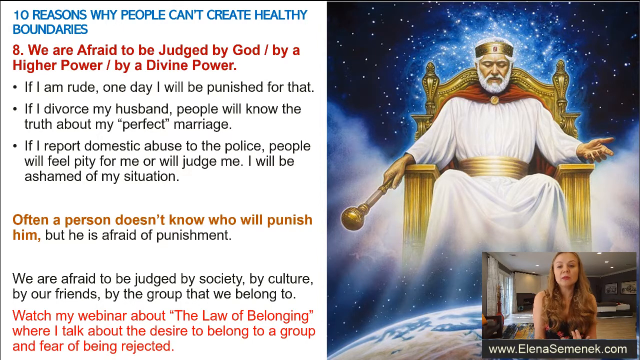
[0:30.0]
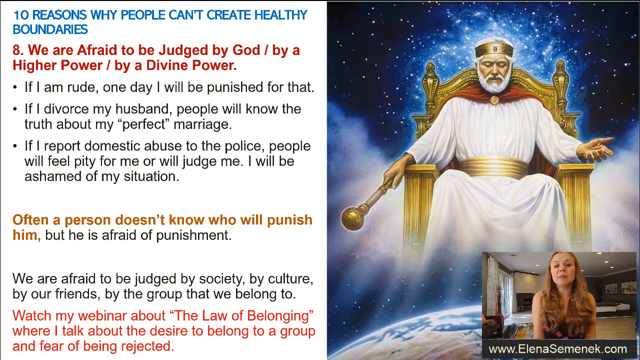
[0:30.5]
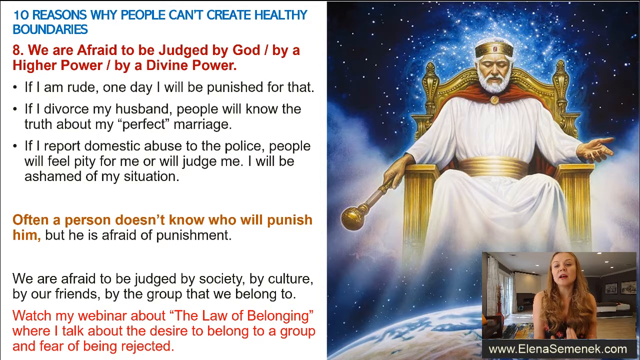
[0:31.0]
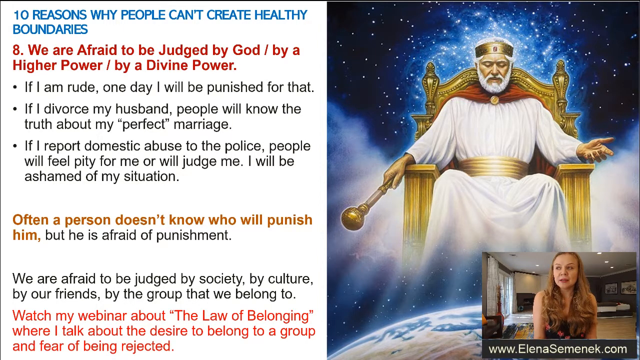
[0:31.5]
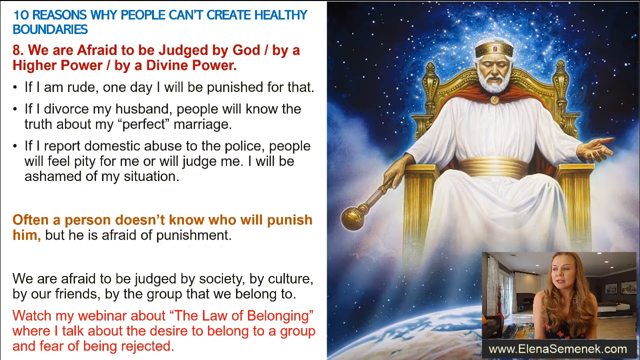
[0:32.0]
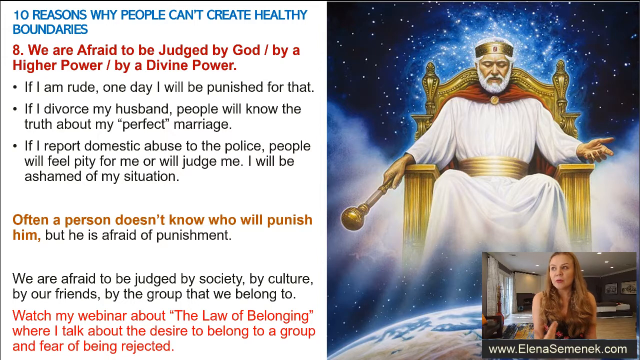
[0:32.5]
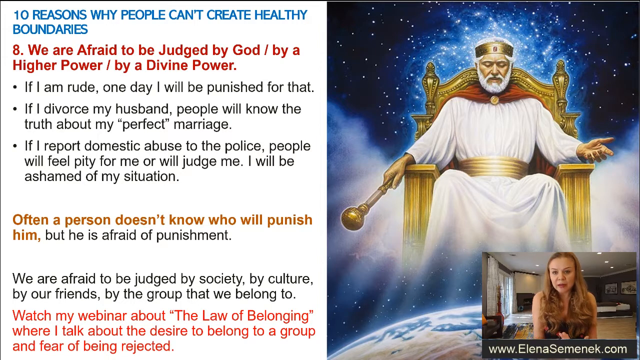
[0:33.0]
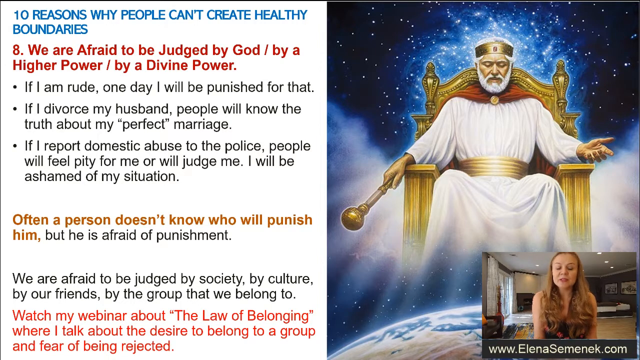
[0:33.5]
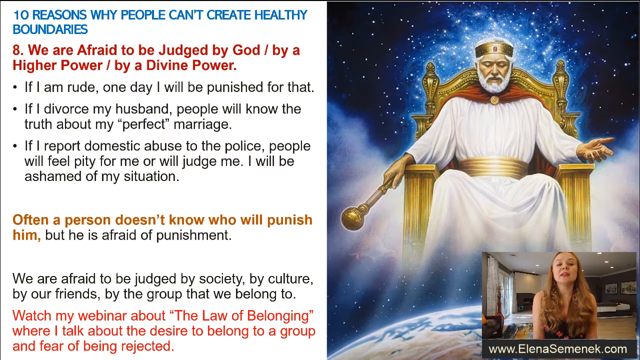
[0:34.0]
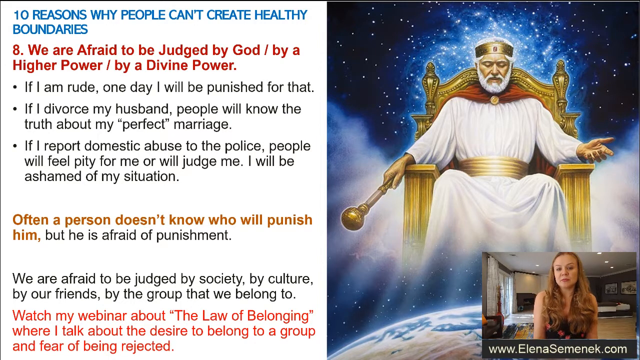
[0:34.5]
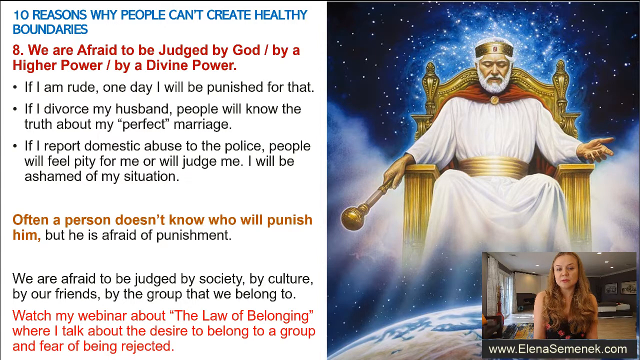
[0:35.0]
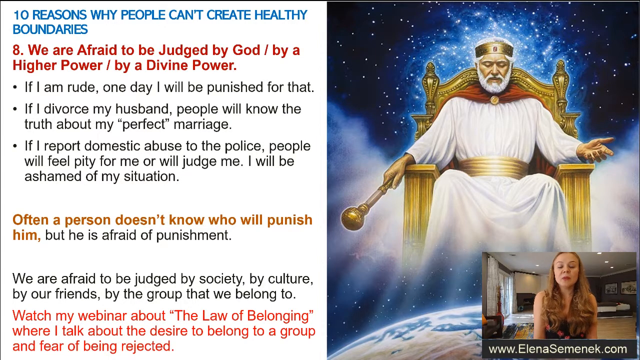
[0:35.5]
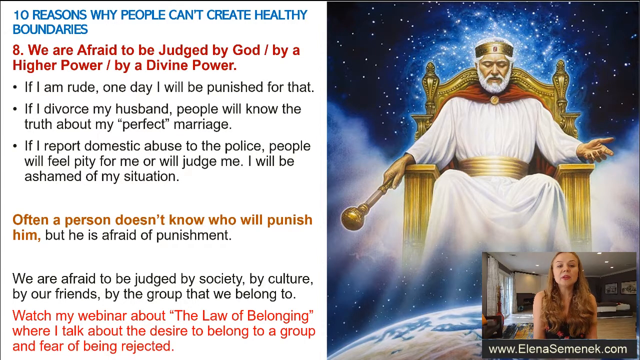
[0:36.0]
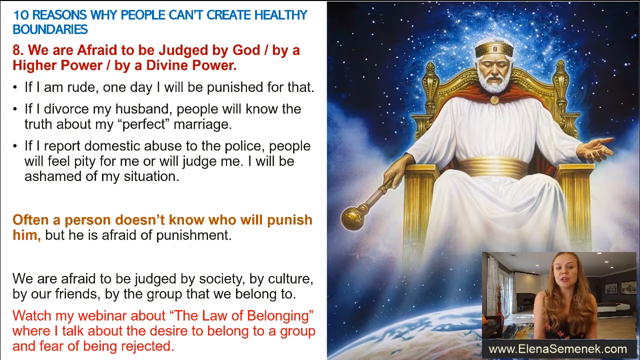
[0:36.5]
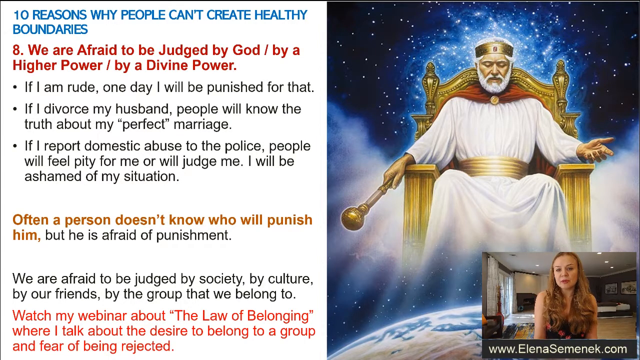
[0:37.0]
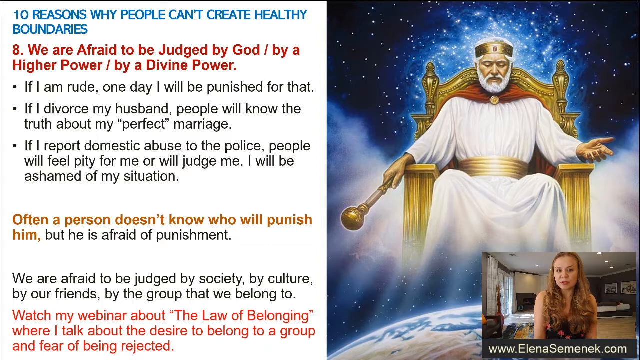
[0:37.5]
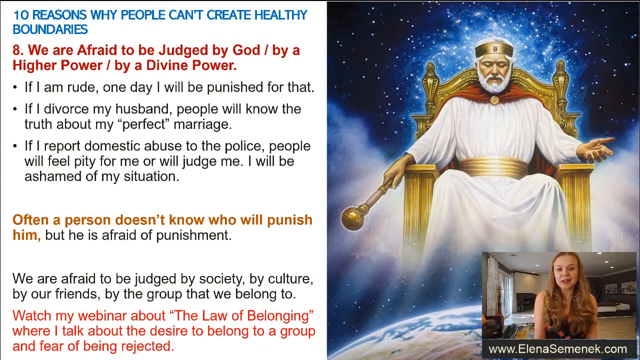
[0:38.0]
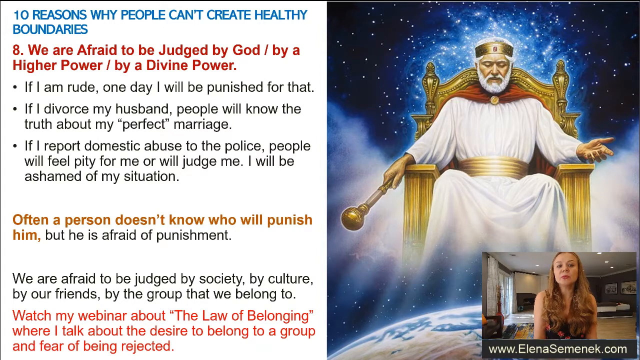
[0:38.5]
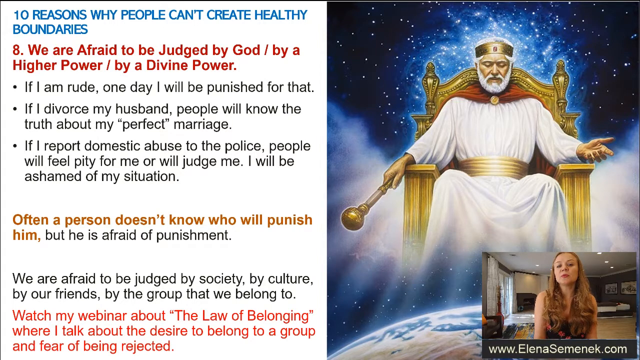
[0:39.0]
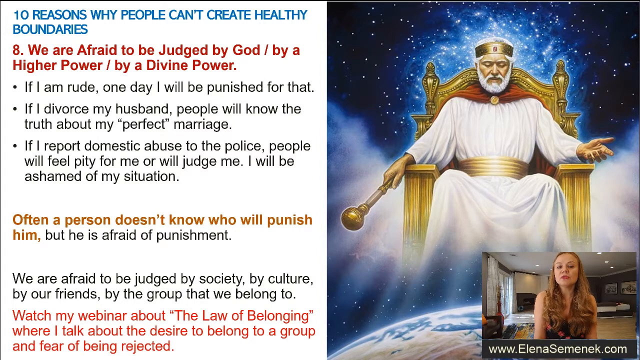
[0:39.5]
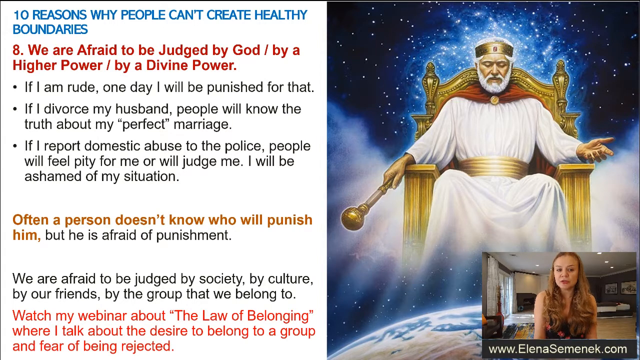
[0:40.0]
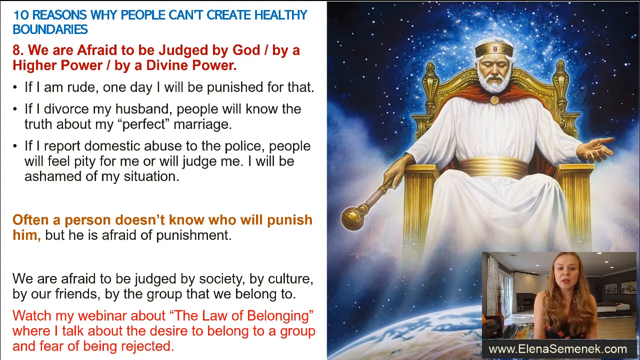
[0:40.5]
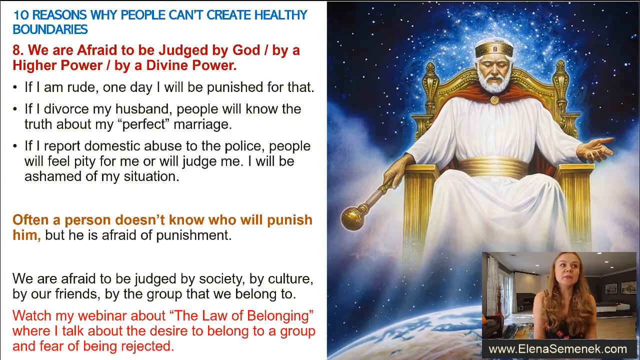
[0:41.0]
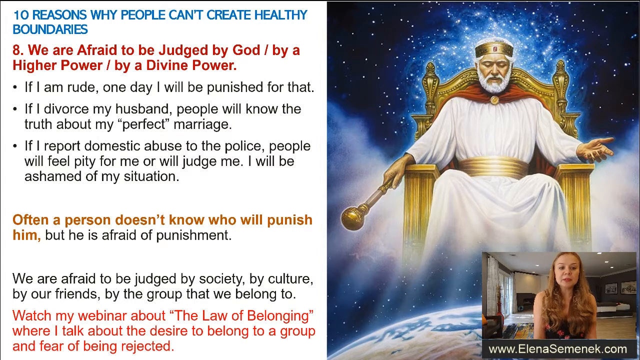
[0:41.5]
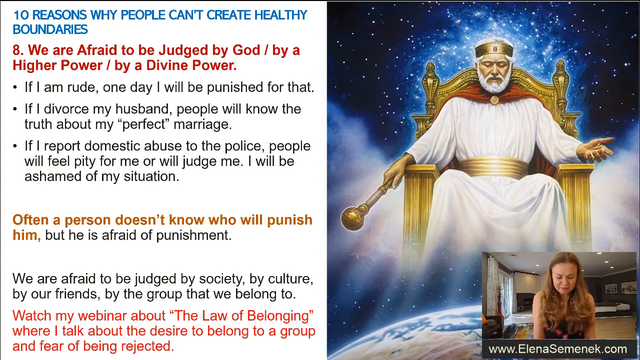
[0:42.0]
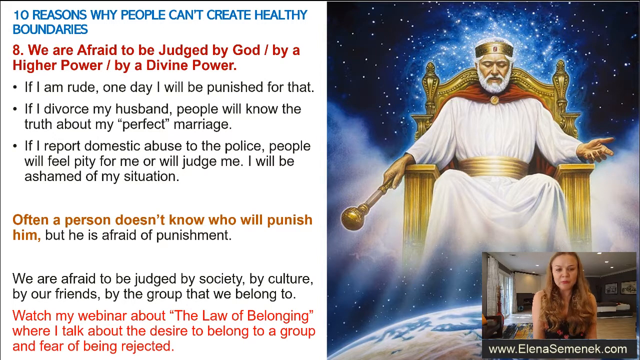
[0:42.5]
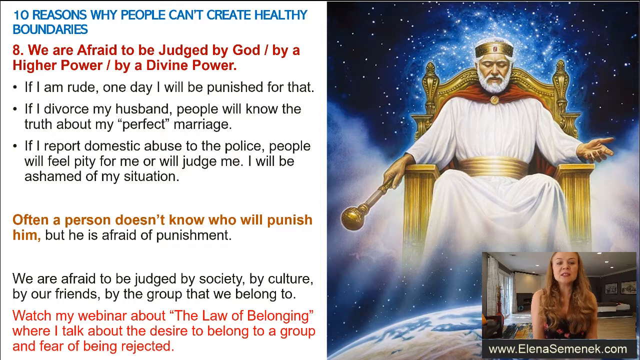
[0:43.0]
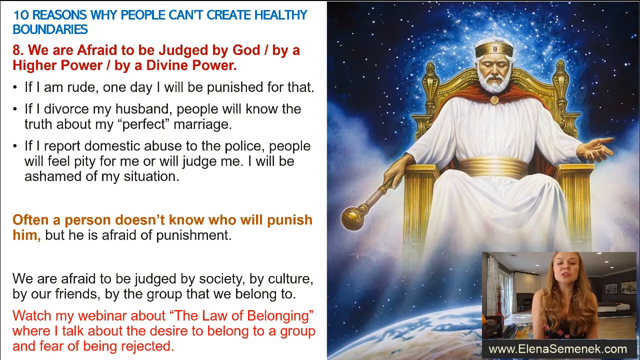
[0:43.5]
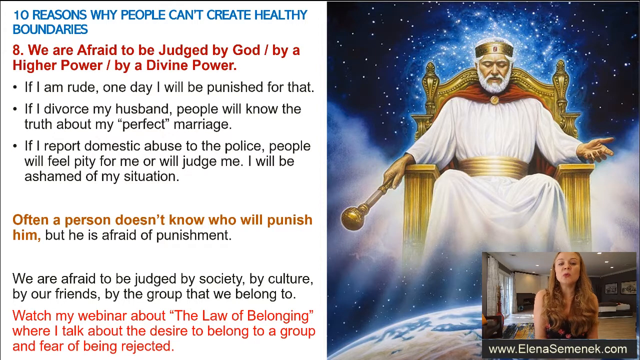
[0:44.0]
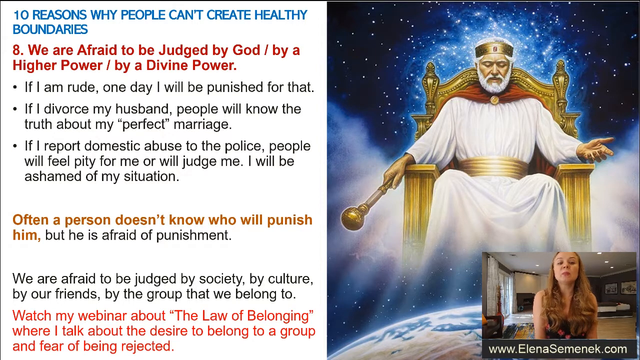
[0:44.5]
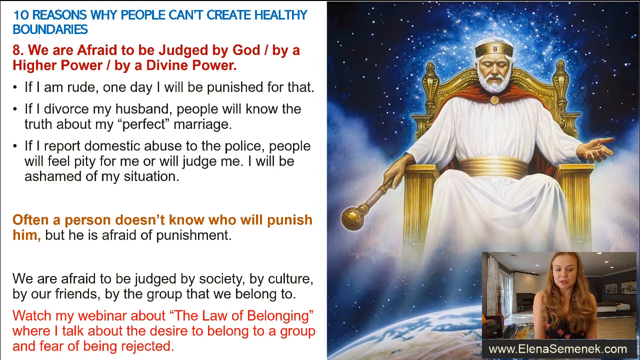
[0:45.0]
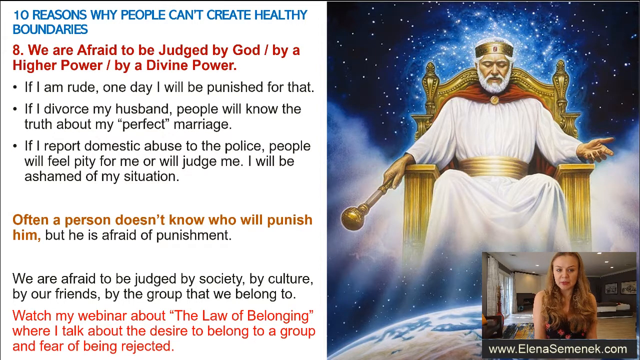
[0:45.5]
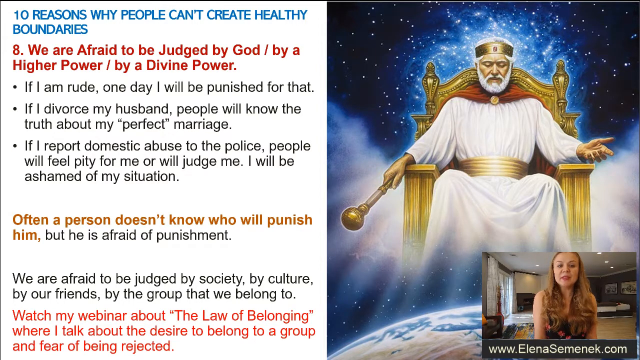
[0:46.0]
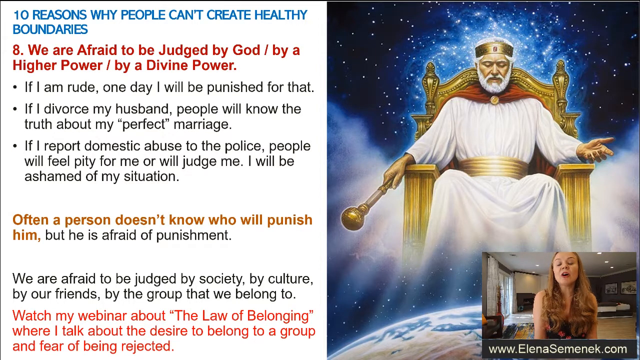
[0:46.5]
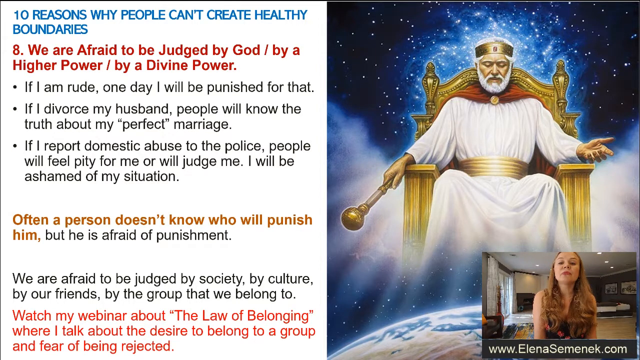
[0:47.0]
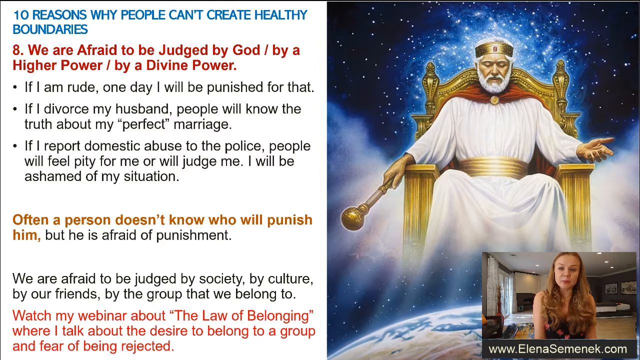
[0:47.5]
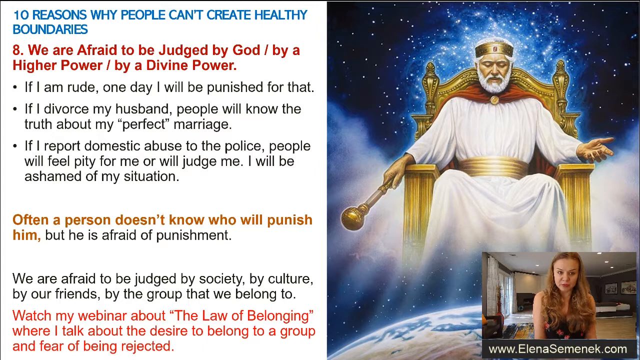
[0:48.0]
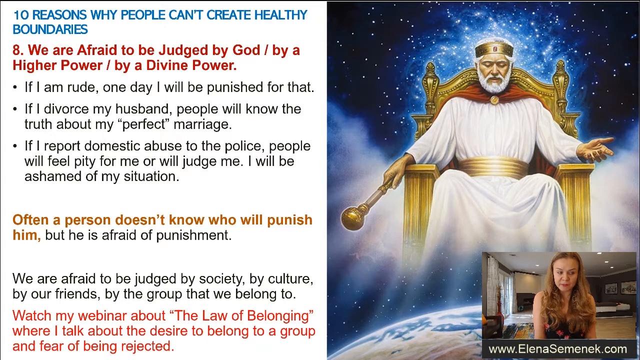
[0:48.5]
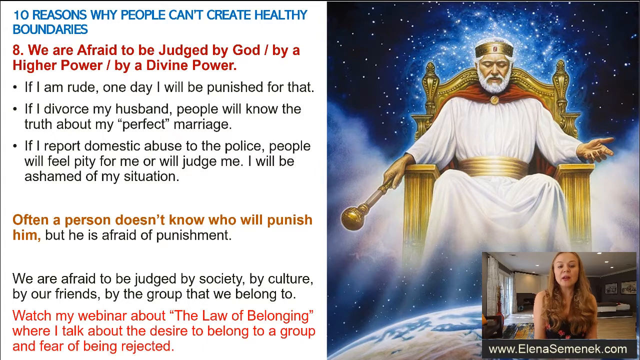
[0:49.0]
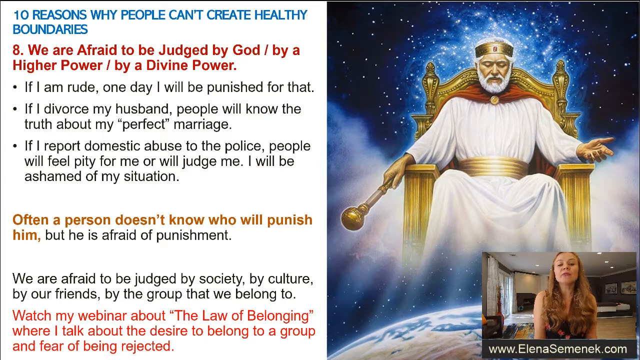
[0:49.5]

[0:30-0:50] In the bottom right-hand corner of the screen is a separate, smaller screen showing a woman with long blonde hair in a black tank top with designs on the front. She speaks while looking directly at the camera, and along the bottom of that video feed it says "www.elanaseminic.com". On the right half of the screen above her is a picture of a big golden throne, apparently a digital drawing. The figure on it has a gold belt, holds a gold spear in his right hand, wears a gold crown, and has a thick white beard and mustache and white hair. Behind him are outer space, white stars and darkness. On the left half of the screen, starting at the very top, it reads: "Ten reasons why people can't create healthy boundaries. We are afraid to be judged by God, by higher power, by a divine power. If I am rude, one day I will be punished for that. If I divorce my husband, people will know the truth about my marriage. If I report domestic abuse to the police, people will feel pity for me or will judge me. I will be ashamed in my situation. Often a person doesn't know who will punish him, but he is afraid of punishment. We are afraid to be judged by society, by culture, by our friends, by the group that we belong to." Underneath, written in red, it says "watch my webinar about the law of belonging where I talked about the desire to belong to a group and fear of being rejected". The woman in the small video in the bottom right-hand corner speaks the whole time.